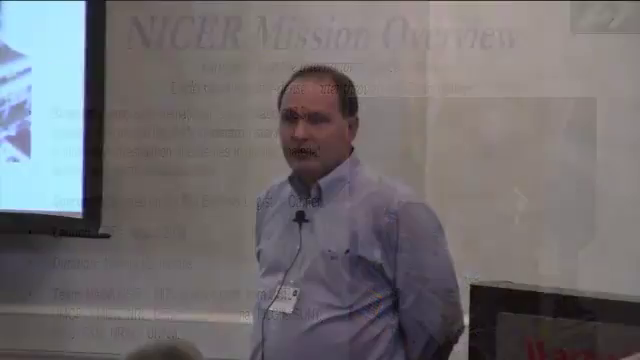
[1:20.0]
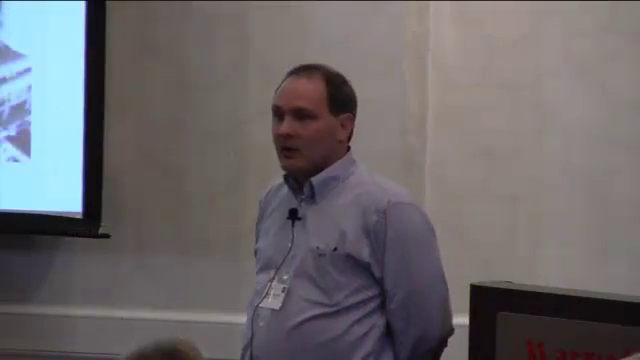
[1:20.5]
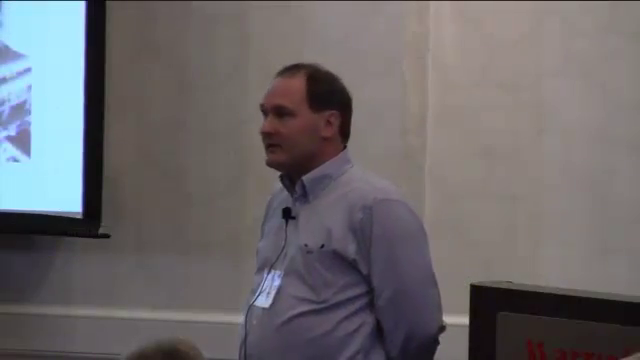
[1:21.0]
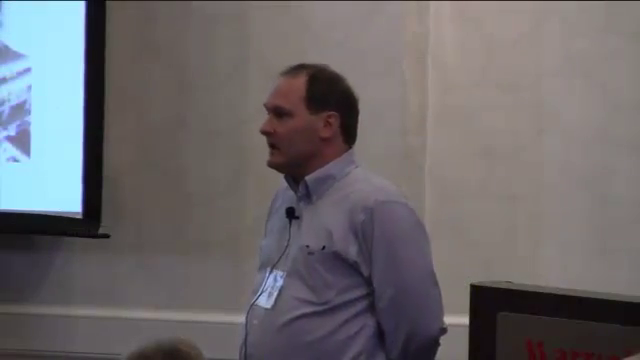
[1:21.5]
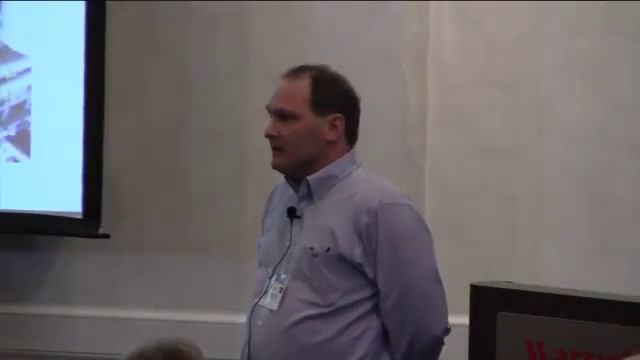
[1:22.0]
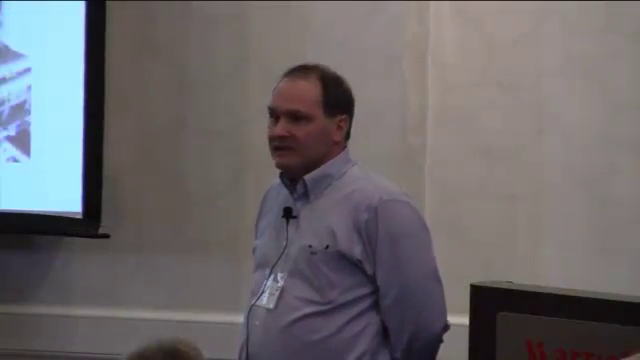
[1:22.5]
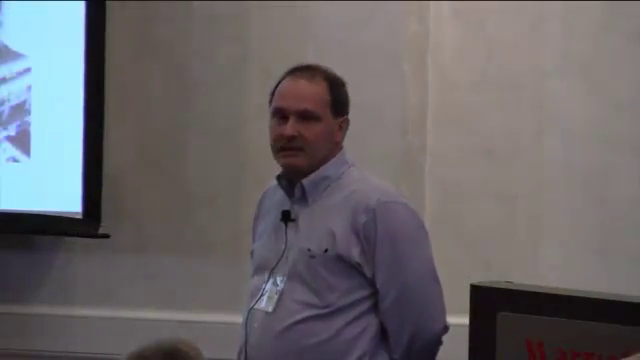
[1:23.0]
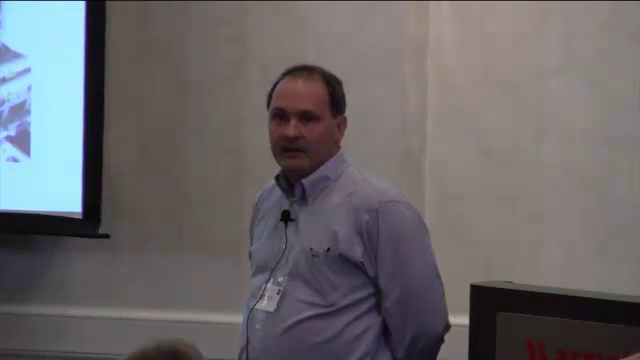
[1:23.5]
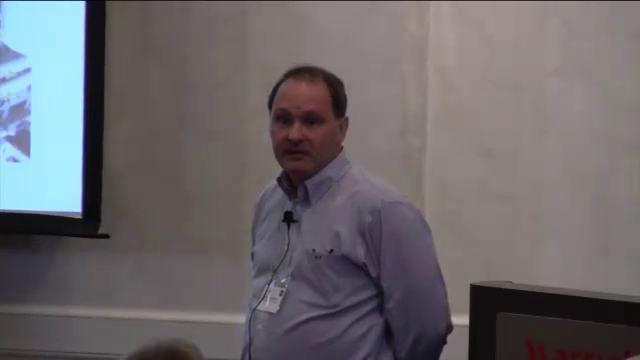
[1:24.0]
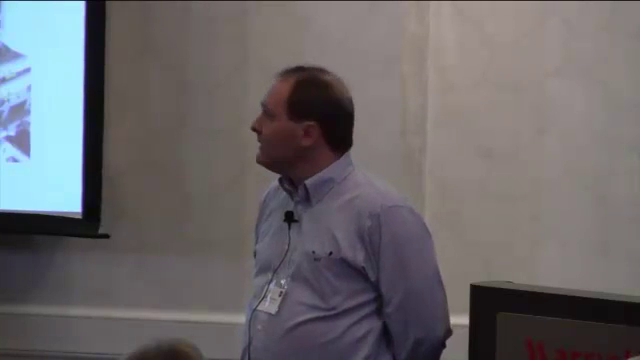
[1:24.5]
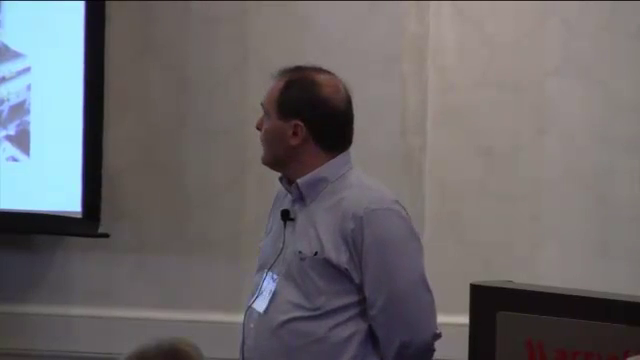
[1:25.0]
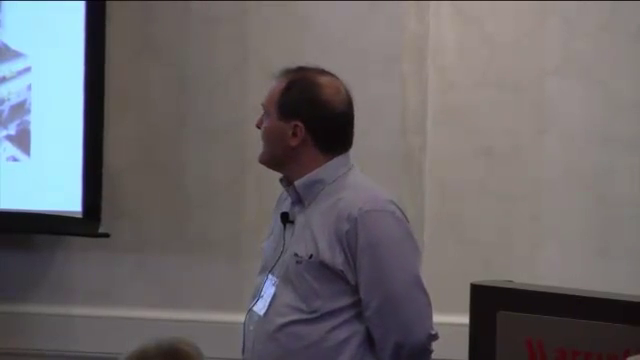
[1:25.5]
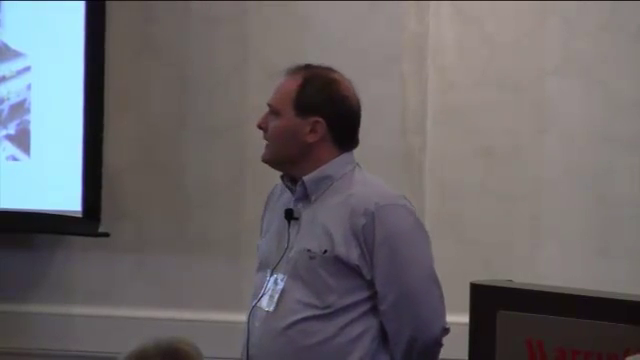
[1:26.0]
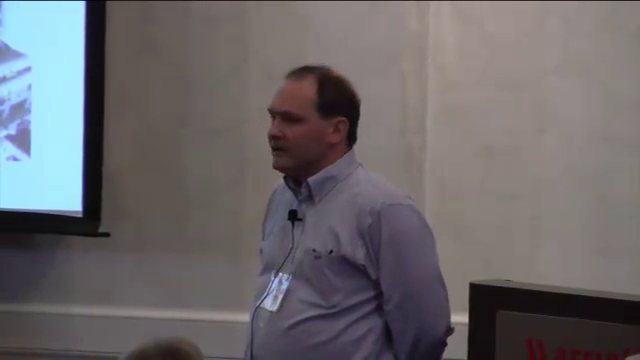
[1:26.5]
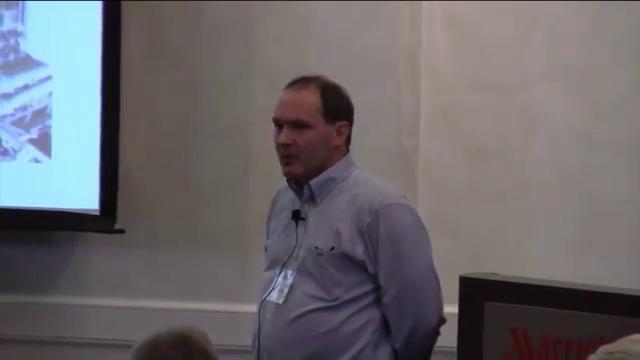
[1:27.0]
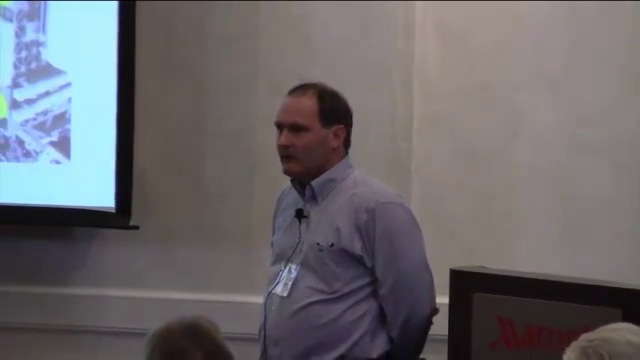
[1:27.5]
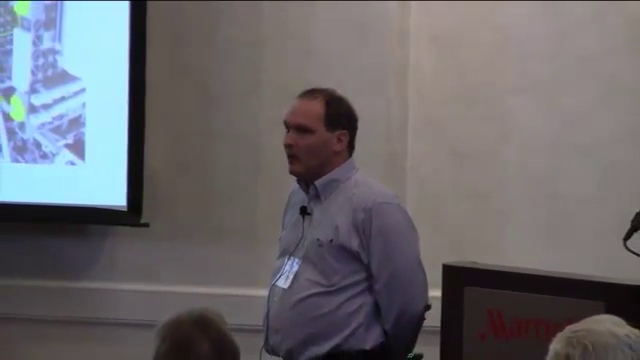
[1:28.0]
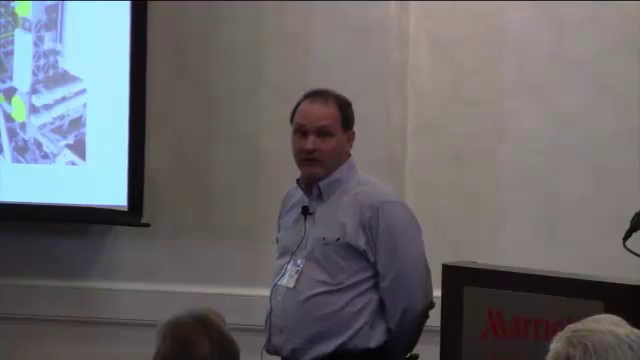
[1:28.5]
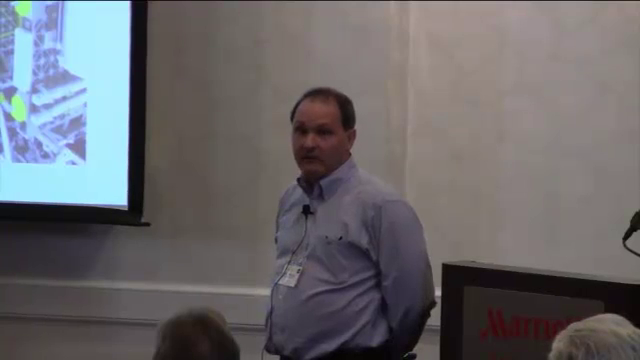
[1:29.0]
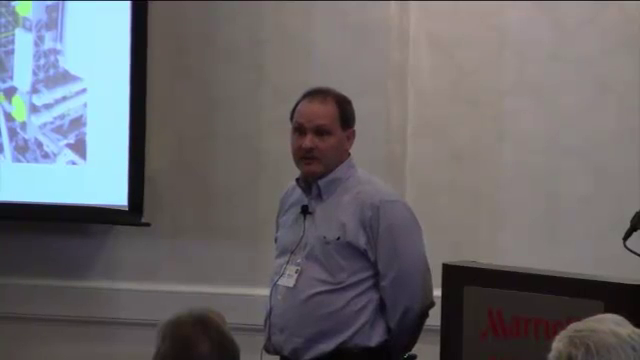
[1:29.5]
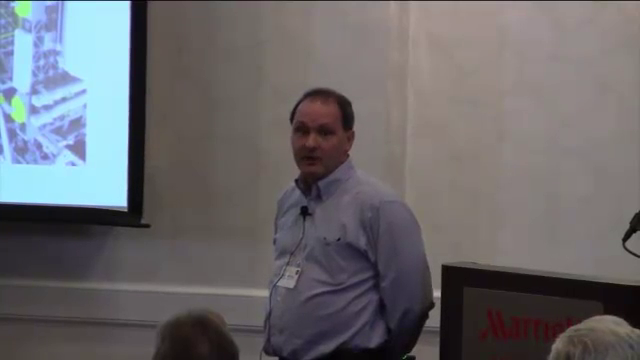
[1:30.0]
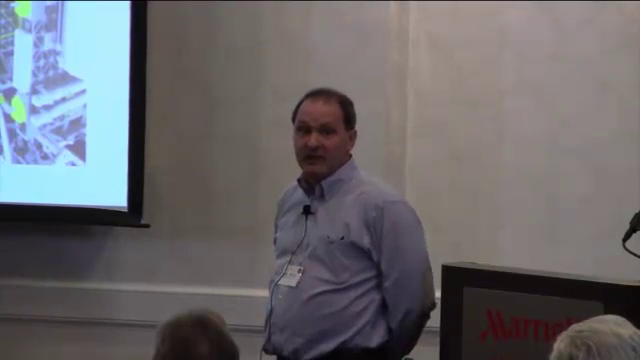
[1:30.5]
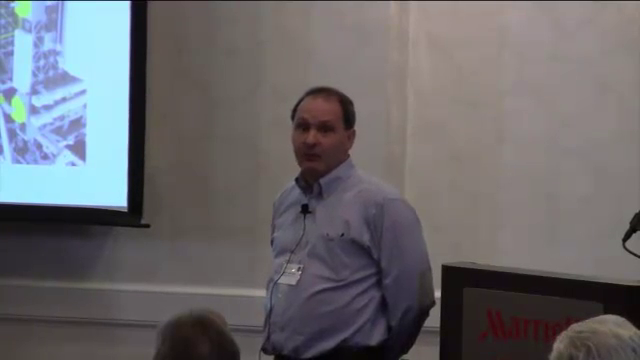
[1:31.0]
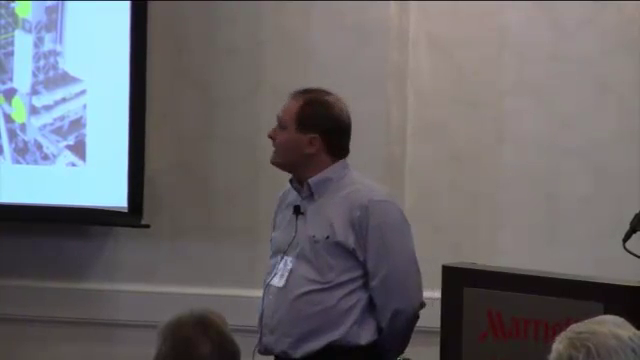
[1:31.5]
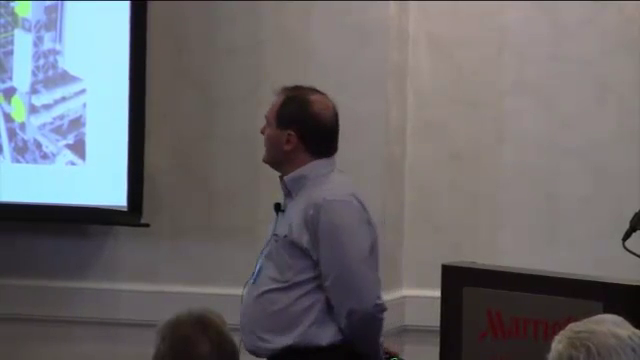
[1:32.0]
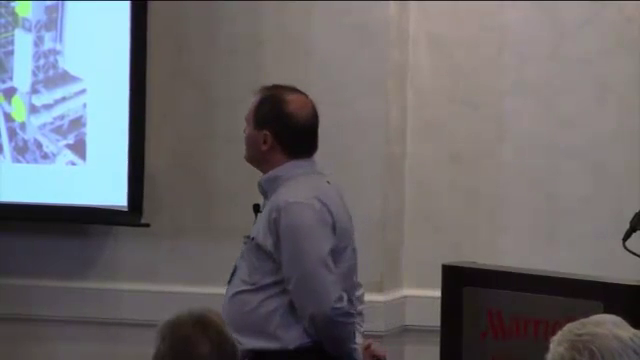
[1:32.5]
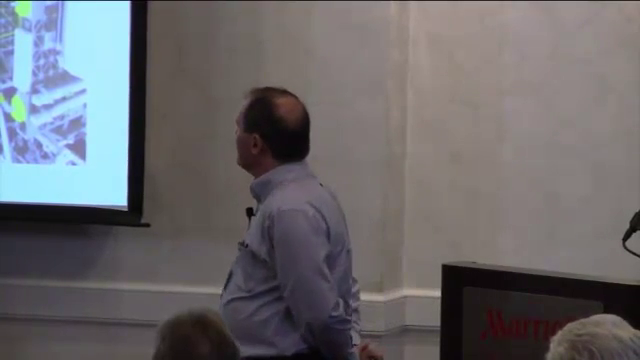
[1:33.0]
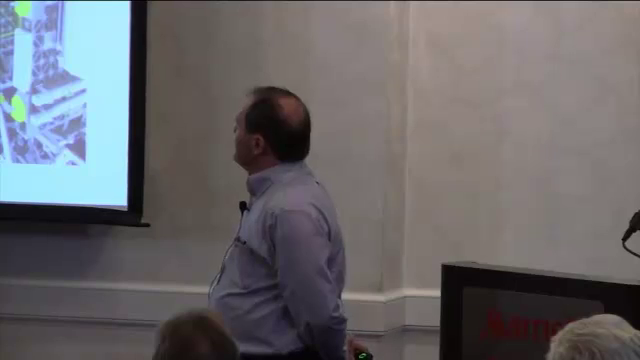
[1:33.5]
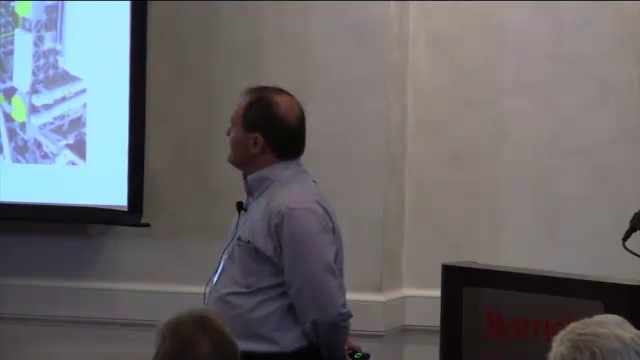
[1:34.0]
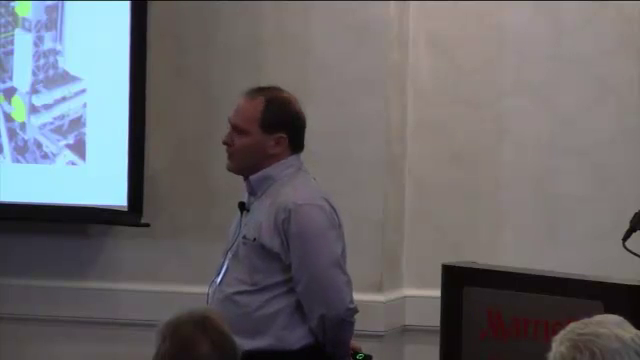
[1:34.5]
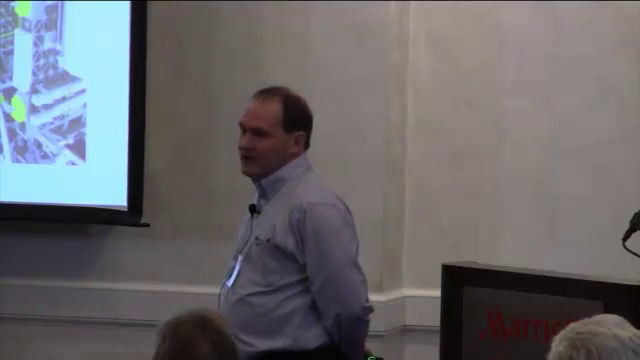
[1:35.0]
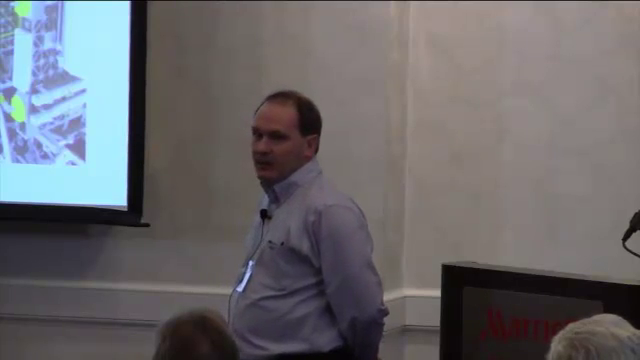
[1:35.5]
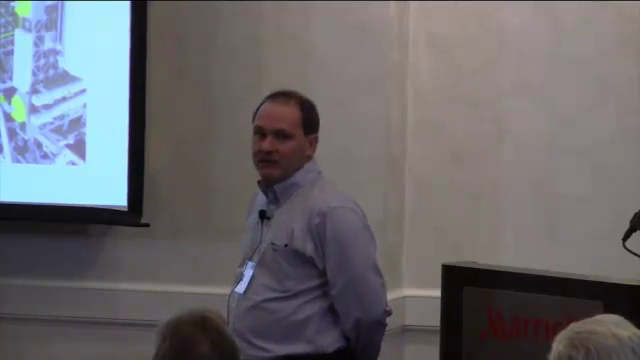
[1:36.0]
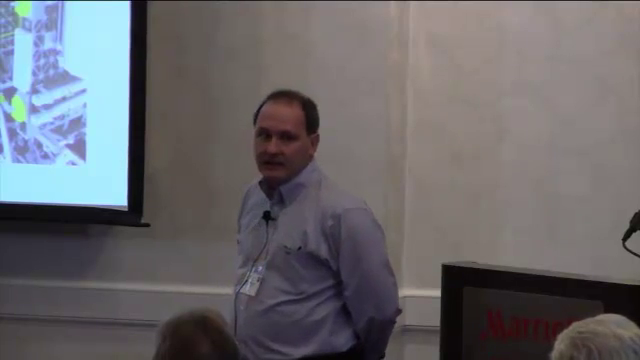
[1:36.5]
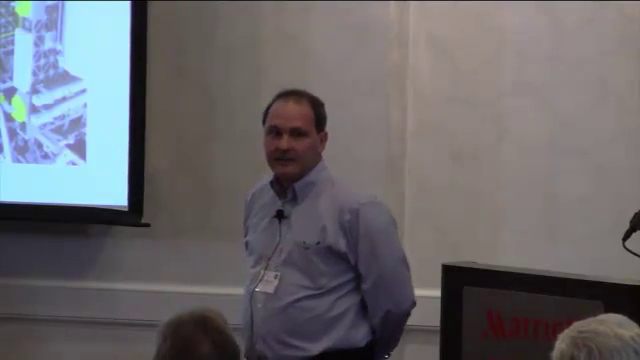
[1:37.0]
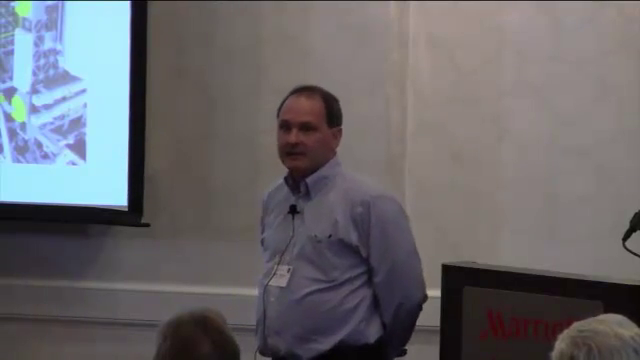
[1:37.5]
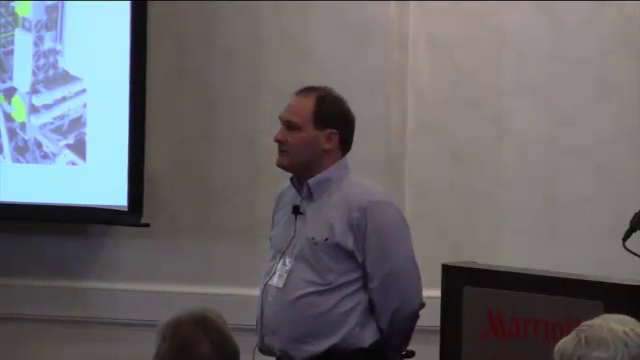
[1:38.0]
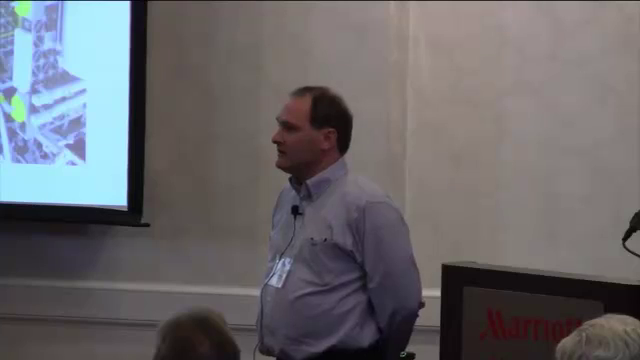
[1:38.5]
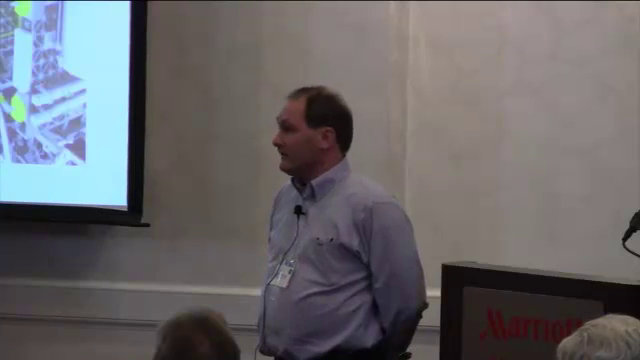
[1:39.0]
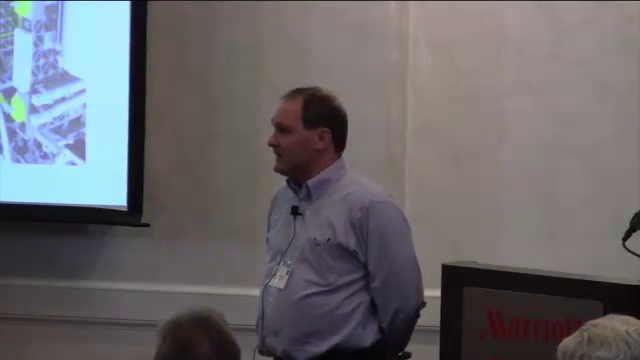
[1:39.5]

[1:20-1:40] The gentleman stands to the left of the podium in a light-colored collared button-down shirt, with a microphone clipped between his second and third buttons and a screen to his right. He continues talking to his audience with his left arm behind his back, looking back and forth between the crowd and the screen to his right (the viewer's left). The wooden podium is to his left. A name badge is clipped to his shirt and rests on top of a large belly. A pocket on his left chest appears to hold a pen or similar item. The screen to his right has a black frame, and only its bottom corner is visible in the upper left of the scene.